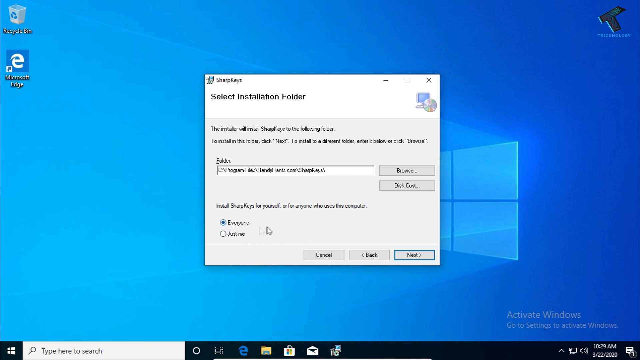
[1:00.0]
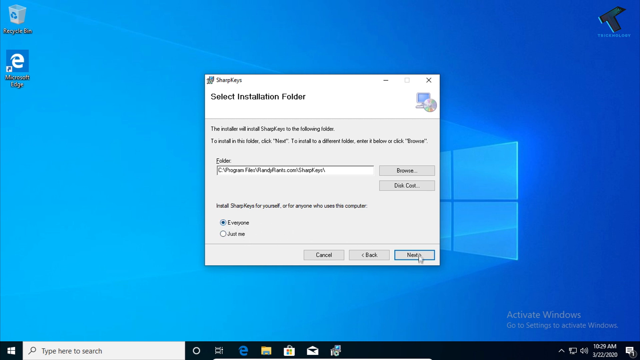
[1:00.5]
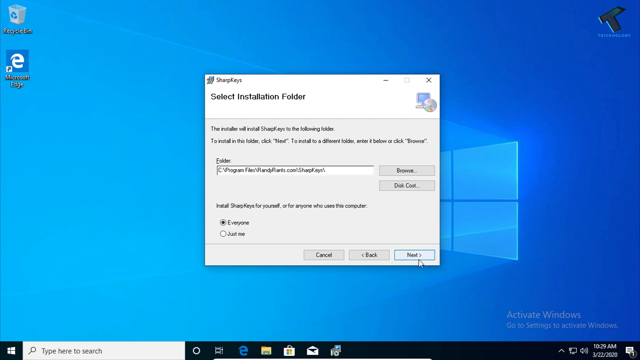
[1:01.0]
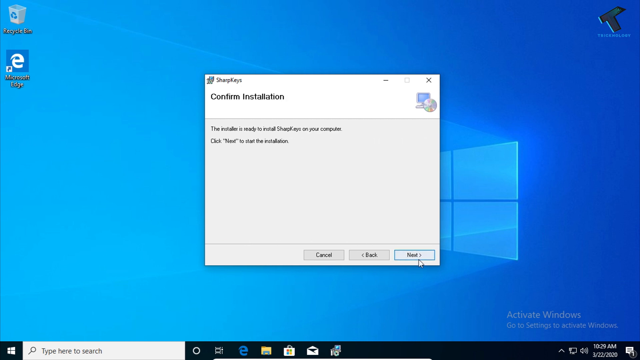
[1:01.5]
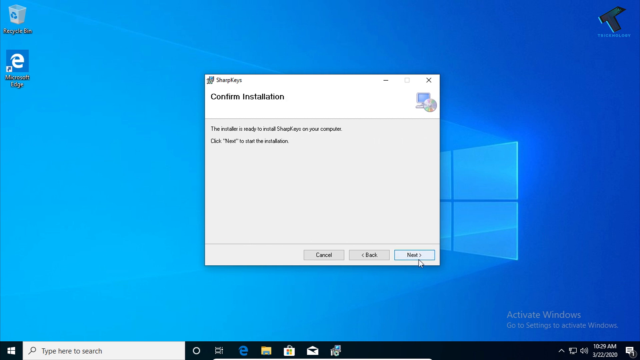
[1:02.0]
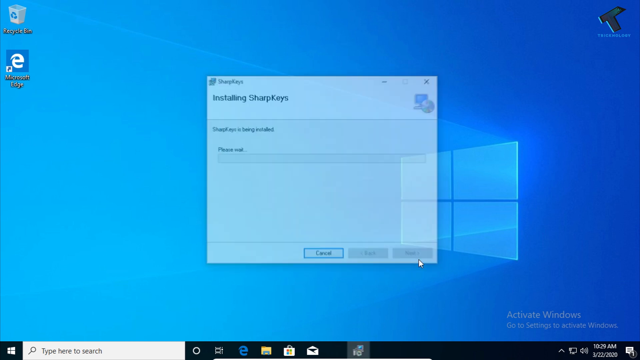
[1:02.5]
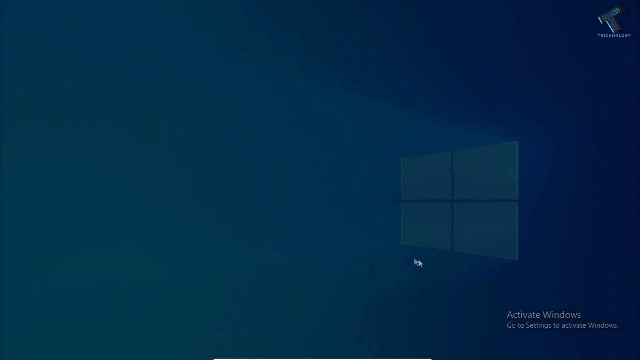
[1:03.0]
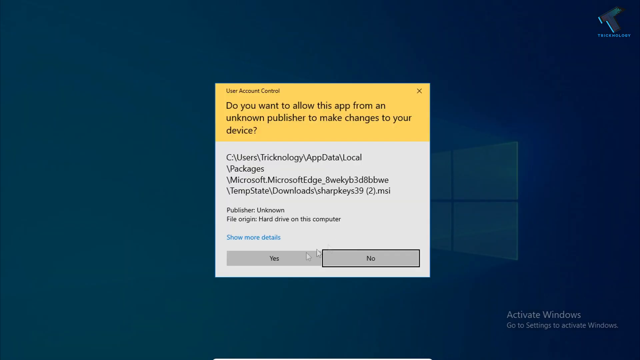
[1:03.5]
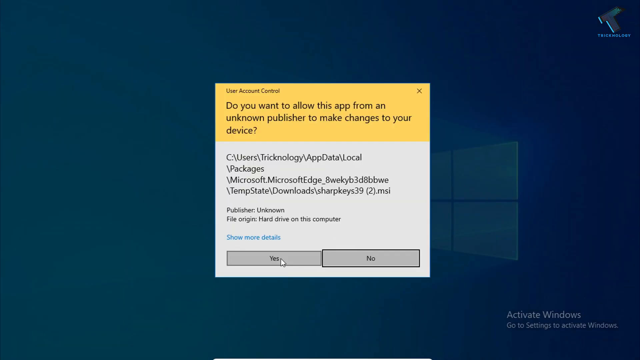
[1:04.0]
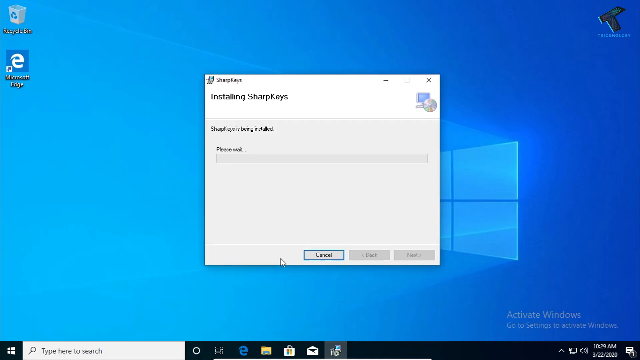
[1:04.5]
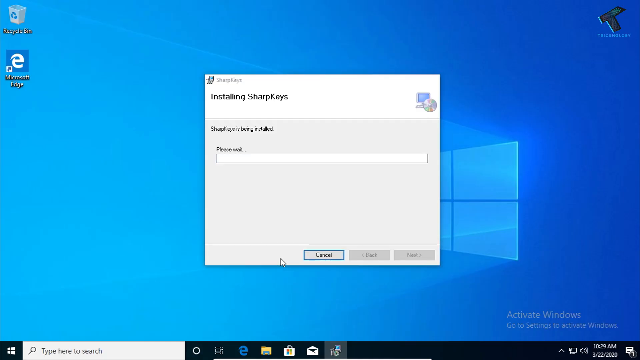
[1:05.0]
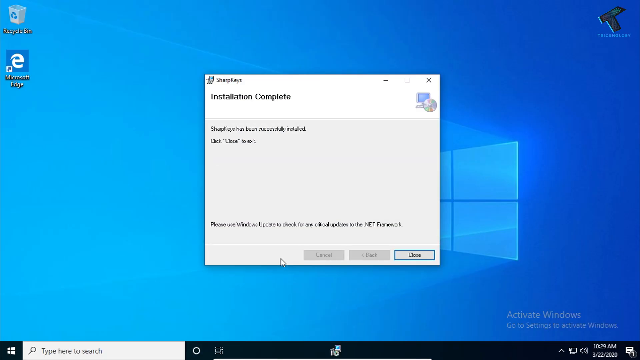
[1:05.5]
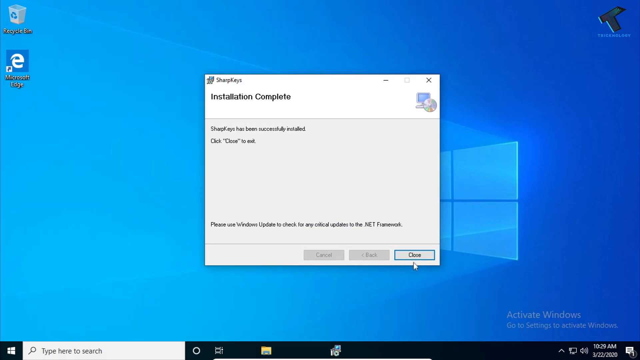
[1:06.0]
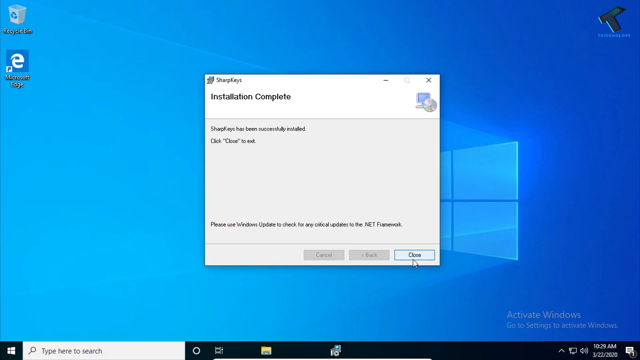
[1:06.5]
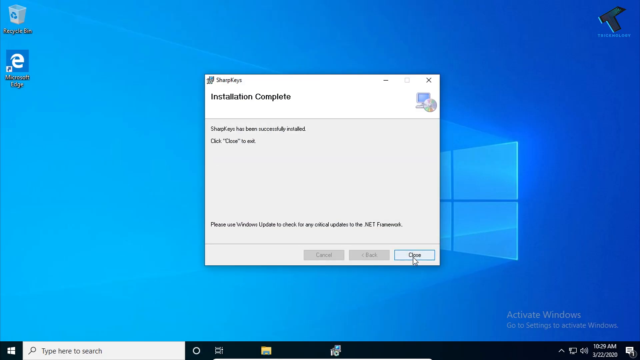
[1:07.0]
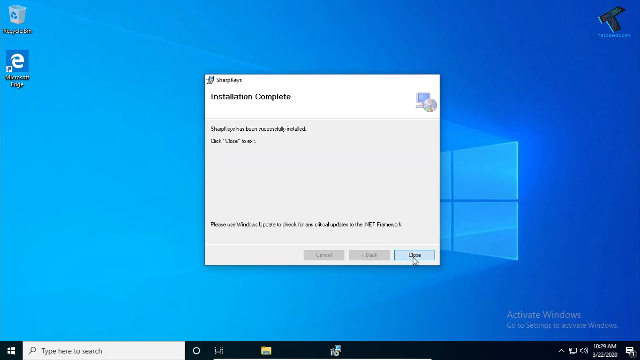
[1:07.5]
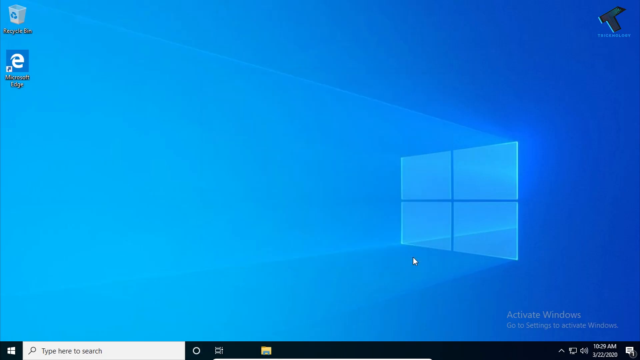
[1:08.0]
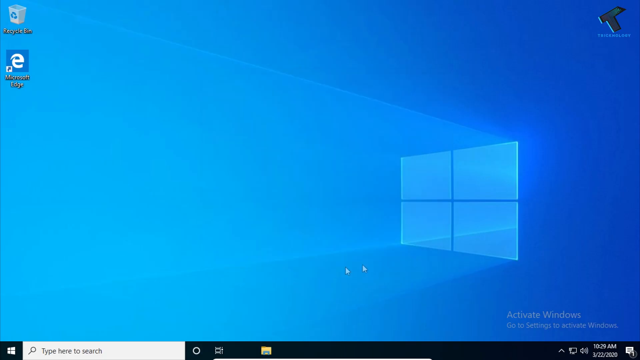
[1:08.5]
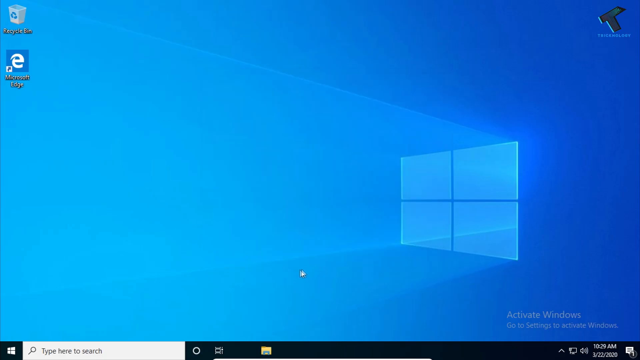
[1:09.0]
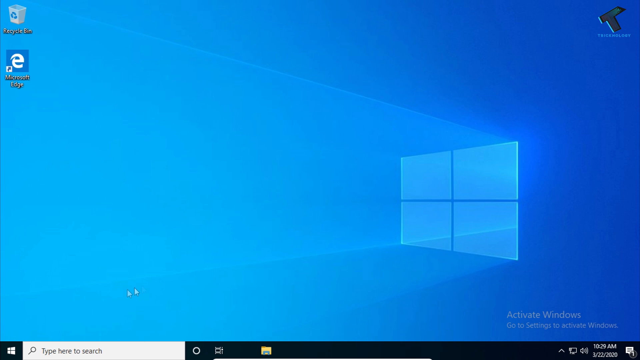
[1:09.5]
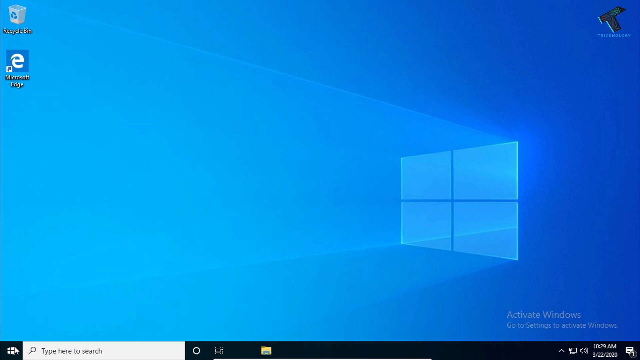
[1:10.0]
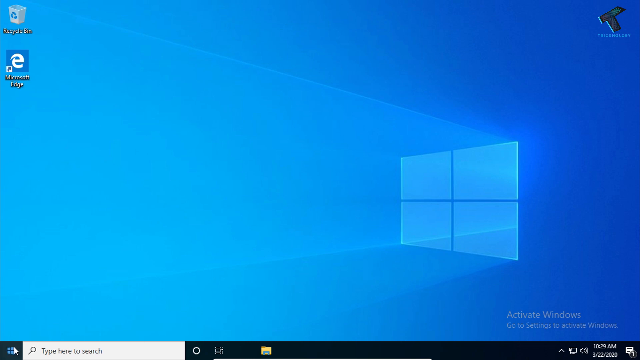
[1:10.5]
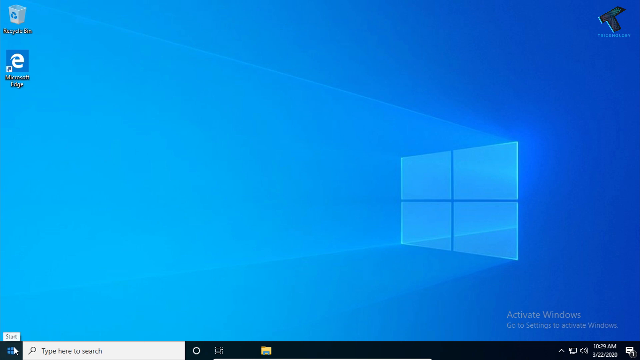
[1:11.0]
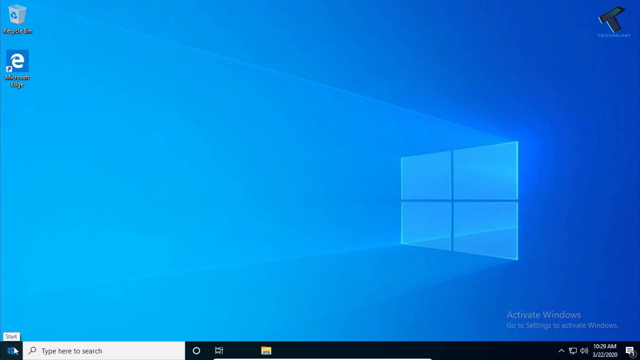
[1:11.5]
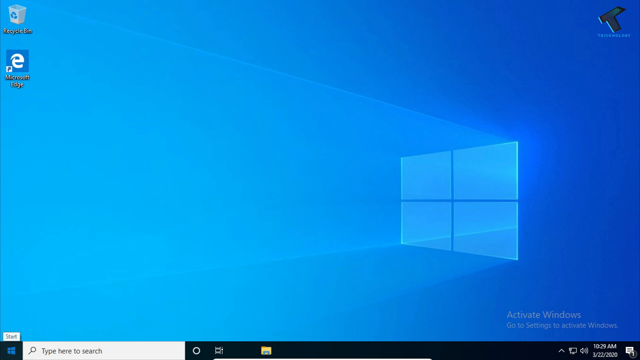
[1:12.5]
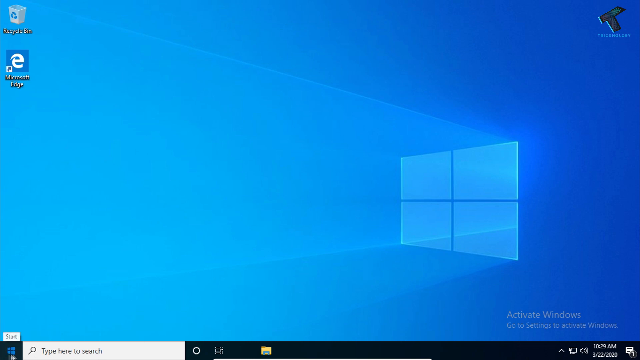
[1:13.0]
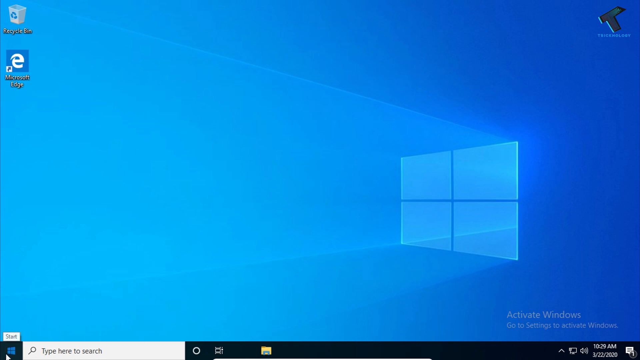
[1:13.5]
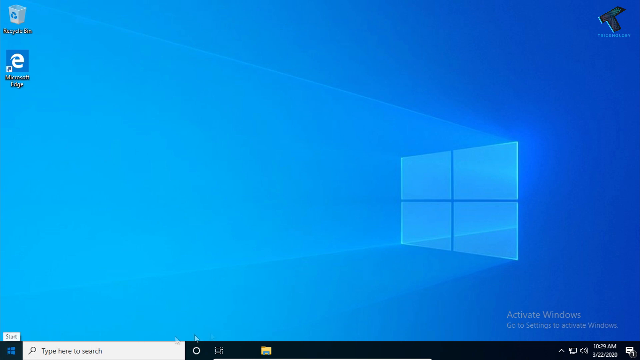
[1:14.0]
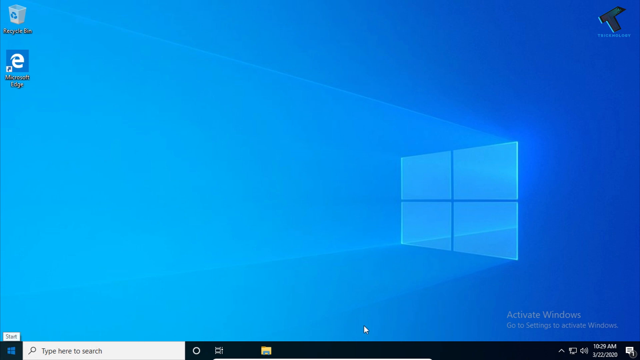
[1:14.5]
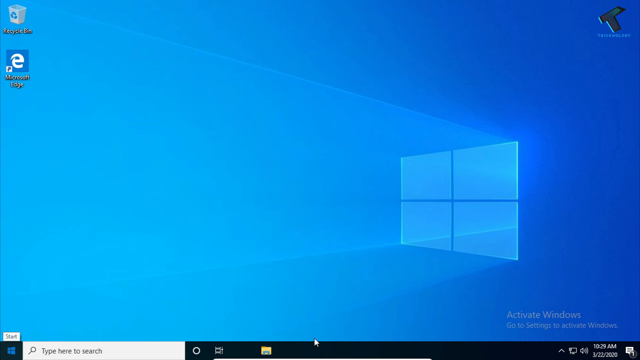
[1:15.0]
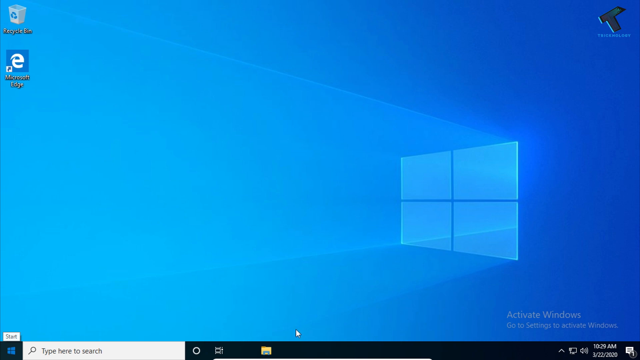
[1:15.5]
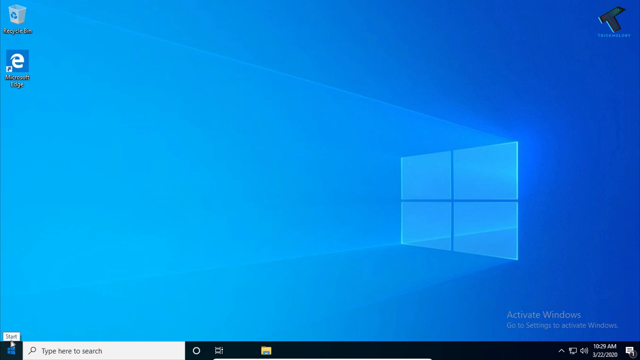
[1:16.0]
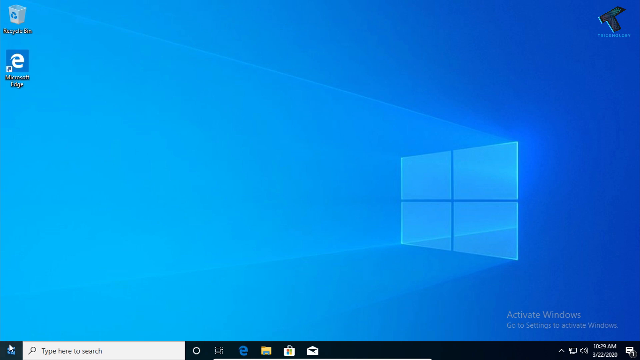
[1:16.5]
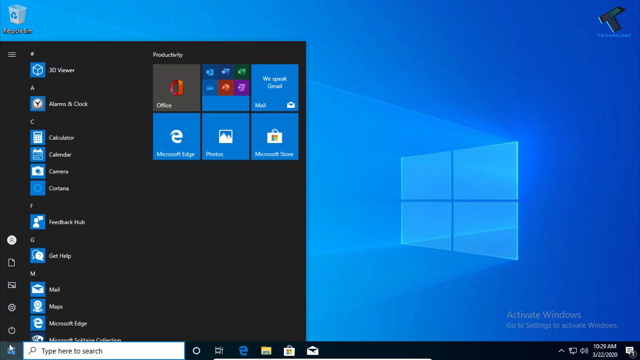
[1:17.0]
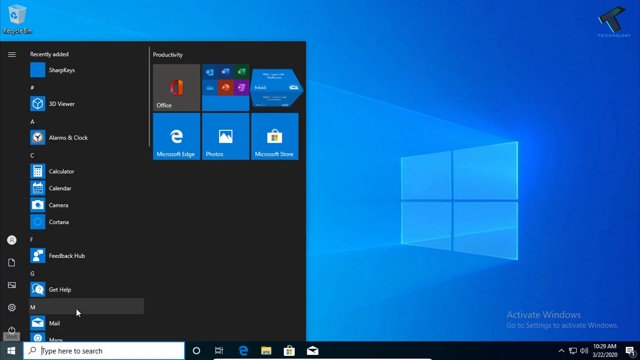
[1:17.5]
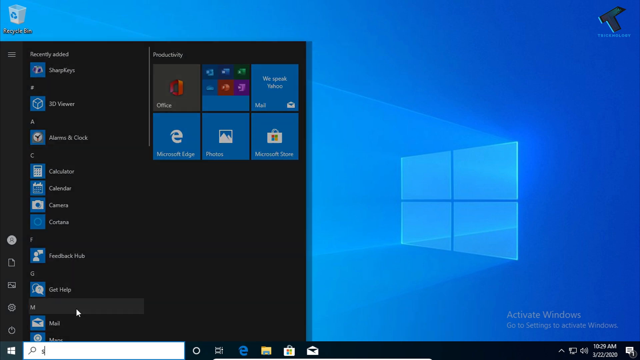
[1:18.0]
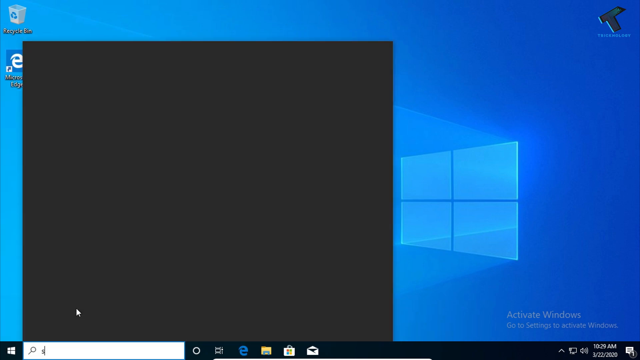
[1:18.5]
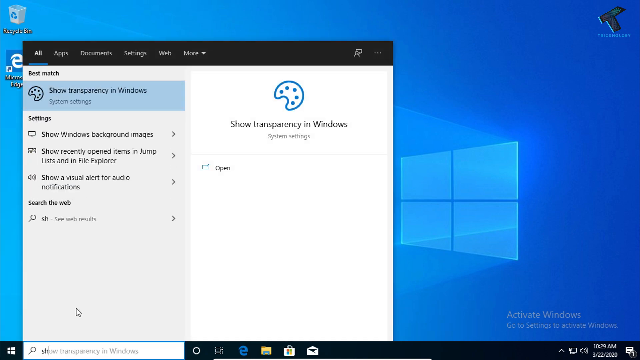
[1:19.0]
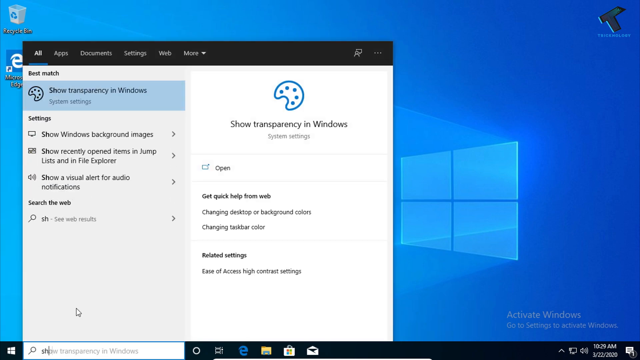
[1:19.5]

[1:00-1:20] The SharpKeys install wizard continues as a pop-up window against the blue background. An installation folder is selected, and the application is set to install just for the current user rather than everybody on the computer. The user switches through some other options before getting further into the install. A yellow and white pop-up reads "do you want to allow this app from an unknown publisher to make changes to your device?", and apparently Yes is selected. The package is installed, and the pop-up window then says "installation complete". The user appears to close that window and then selects the Windows icon in the bottom left of the desktop screen.